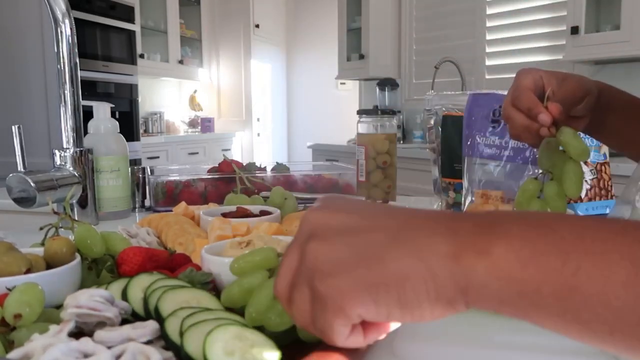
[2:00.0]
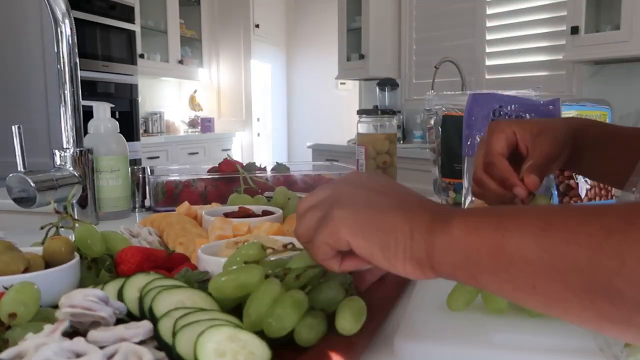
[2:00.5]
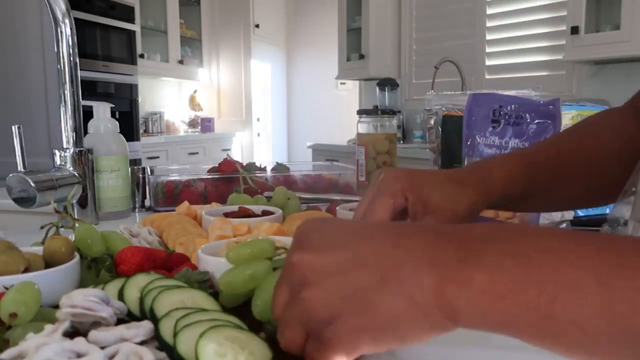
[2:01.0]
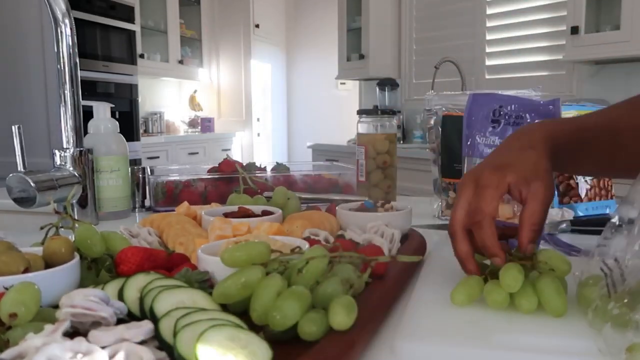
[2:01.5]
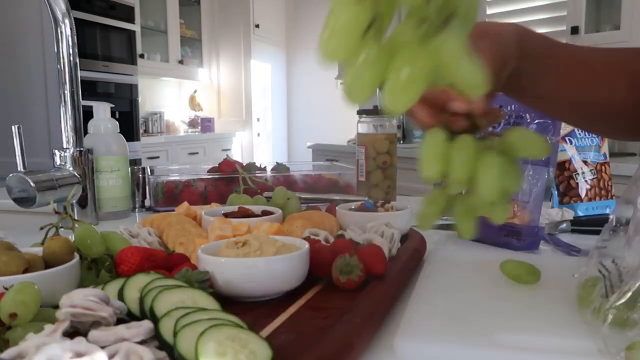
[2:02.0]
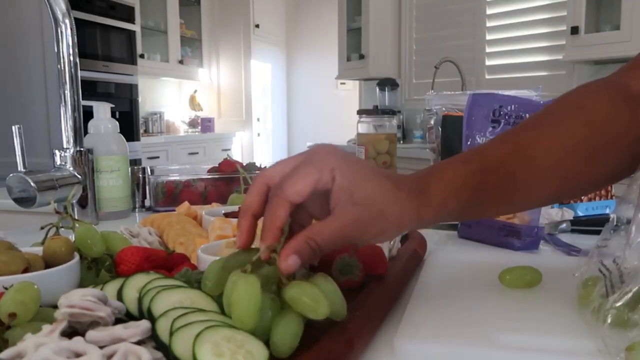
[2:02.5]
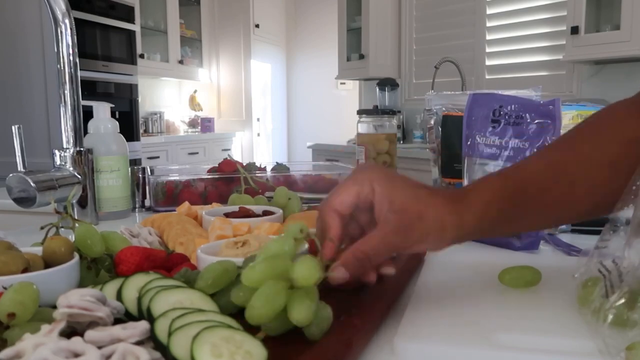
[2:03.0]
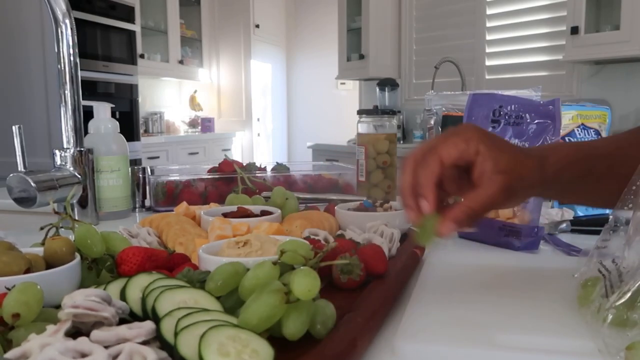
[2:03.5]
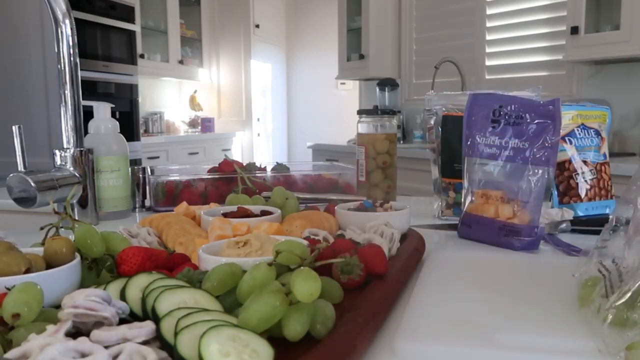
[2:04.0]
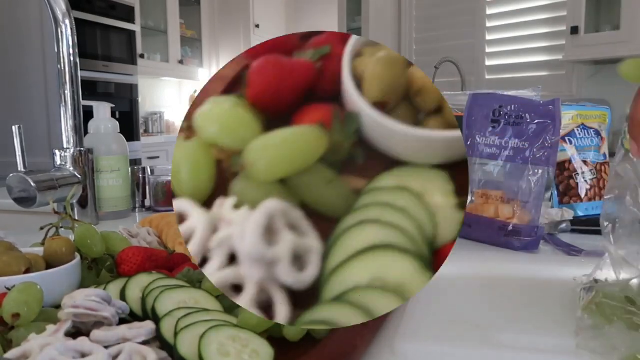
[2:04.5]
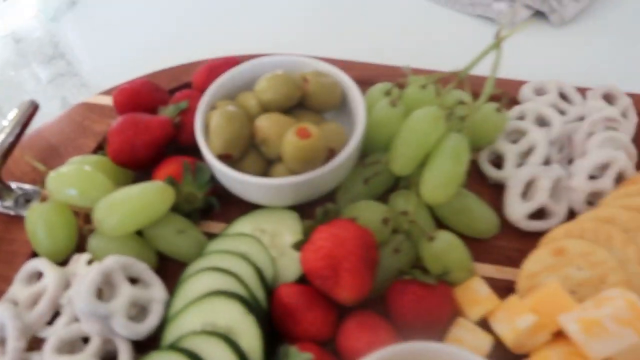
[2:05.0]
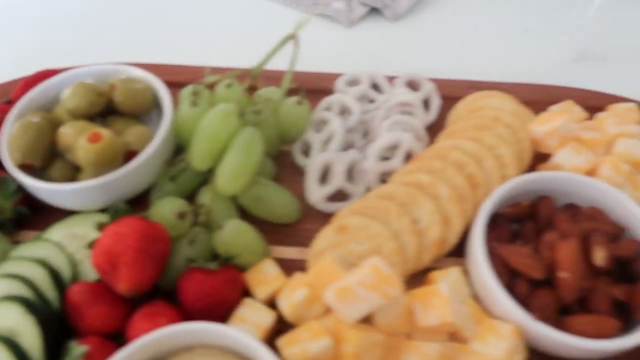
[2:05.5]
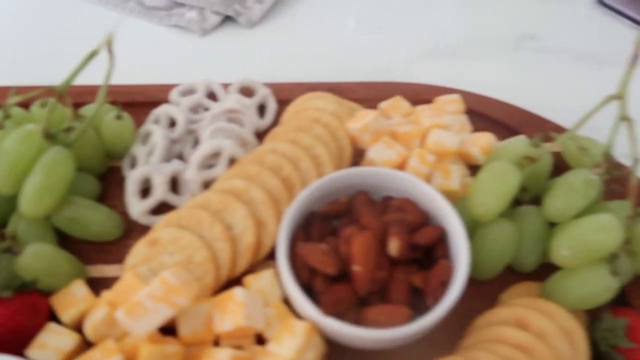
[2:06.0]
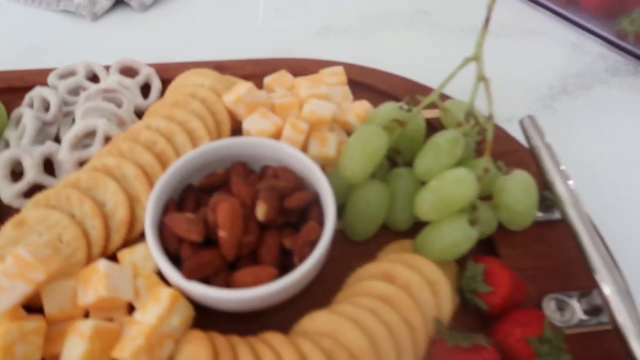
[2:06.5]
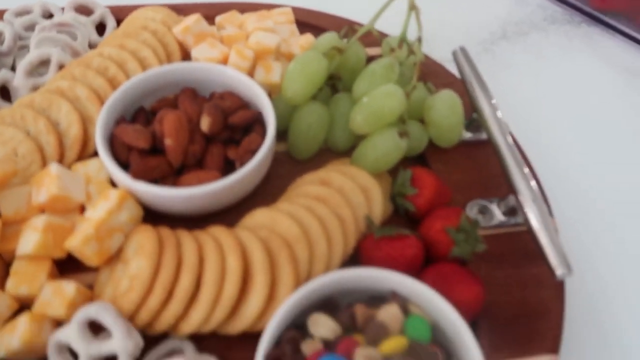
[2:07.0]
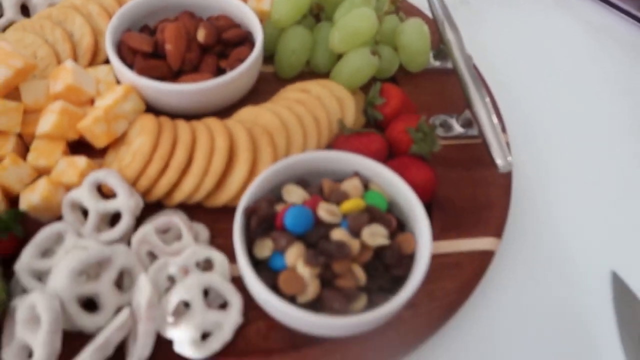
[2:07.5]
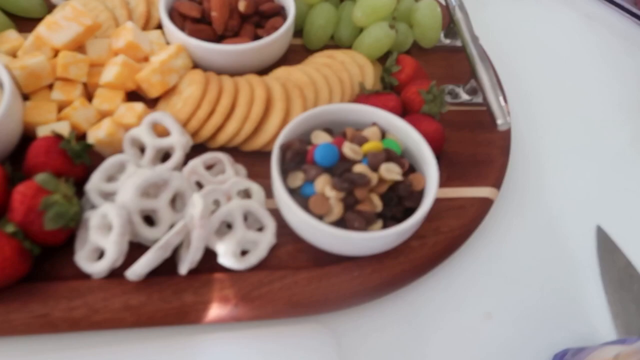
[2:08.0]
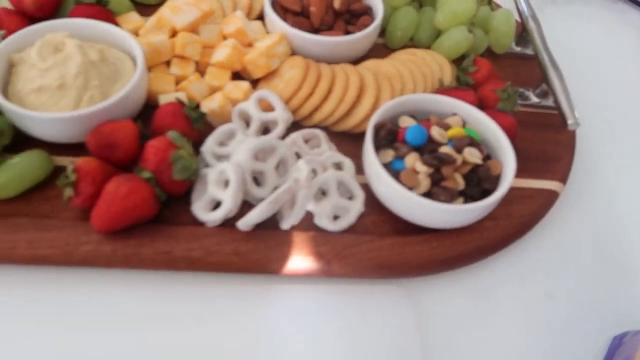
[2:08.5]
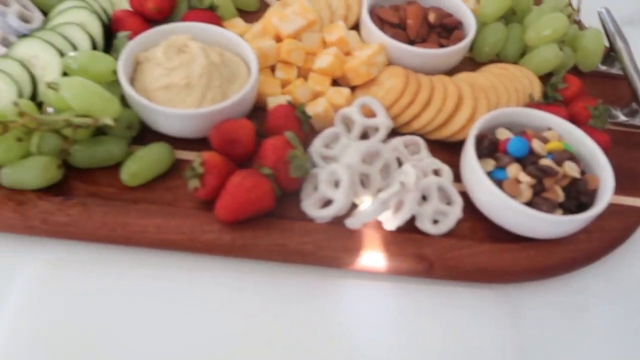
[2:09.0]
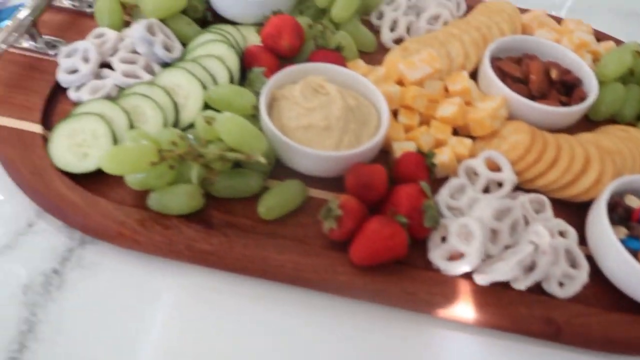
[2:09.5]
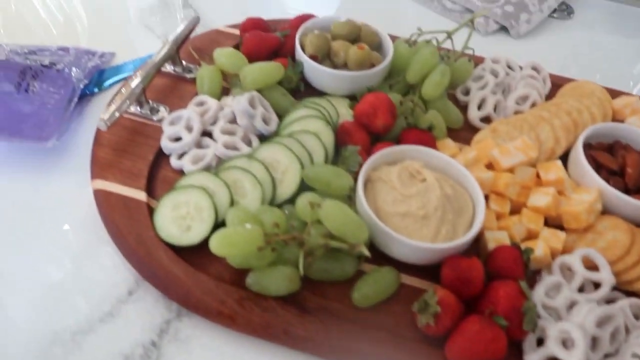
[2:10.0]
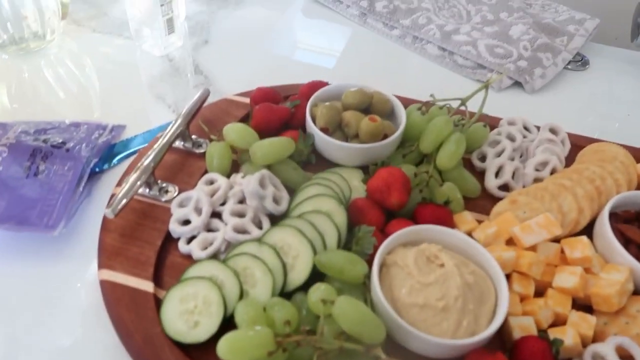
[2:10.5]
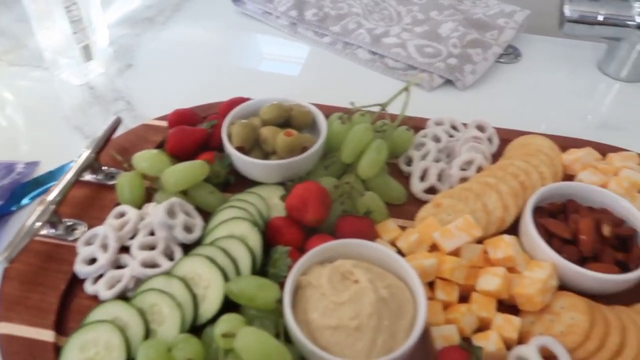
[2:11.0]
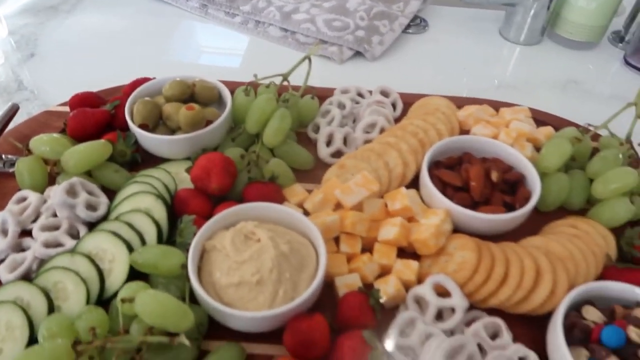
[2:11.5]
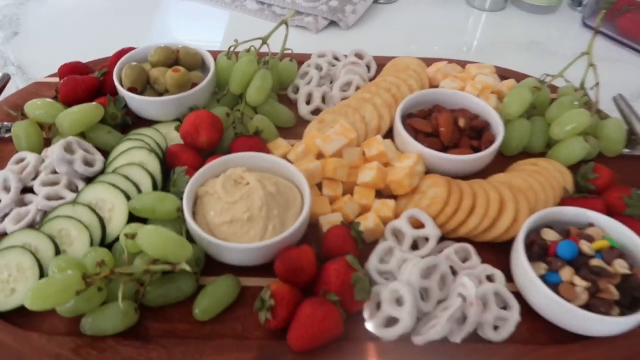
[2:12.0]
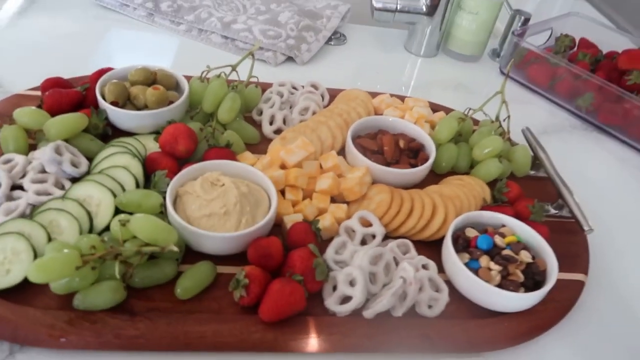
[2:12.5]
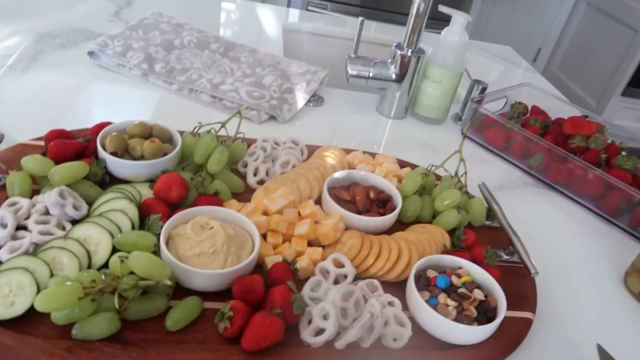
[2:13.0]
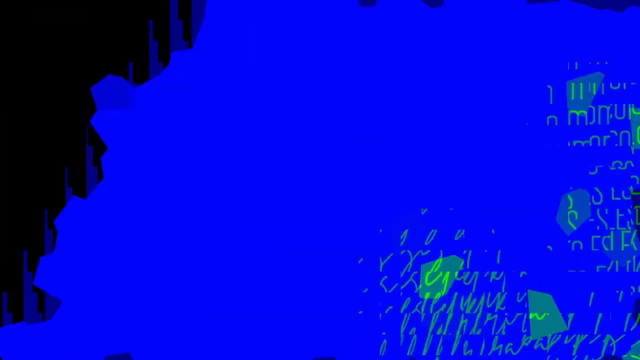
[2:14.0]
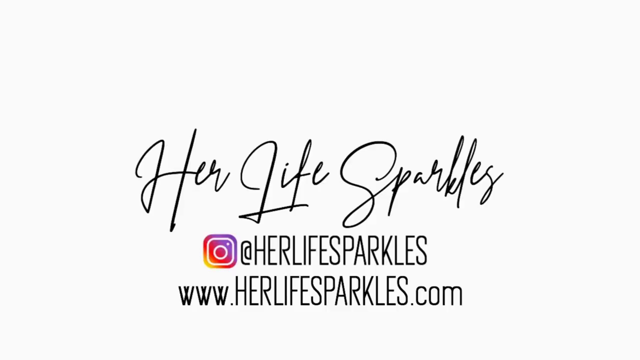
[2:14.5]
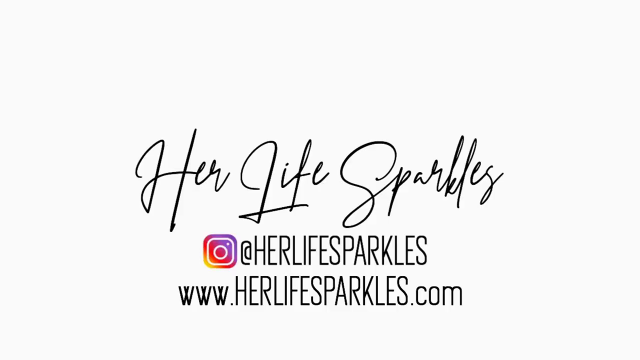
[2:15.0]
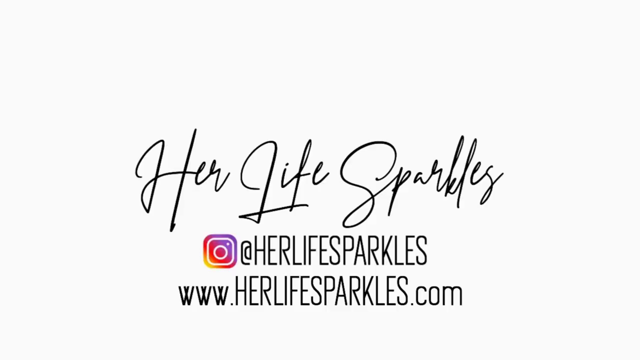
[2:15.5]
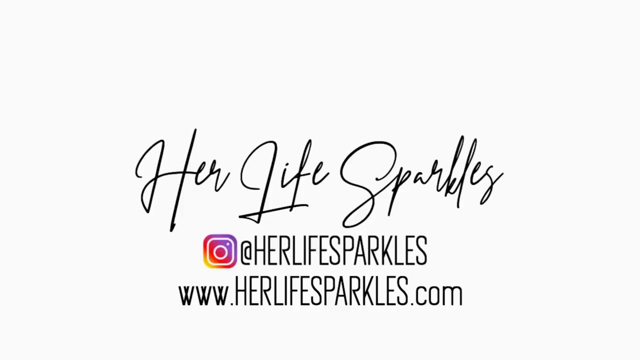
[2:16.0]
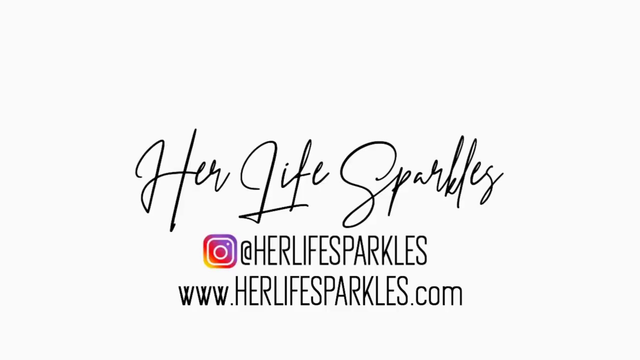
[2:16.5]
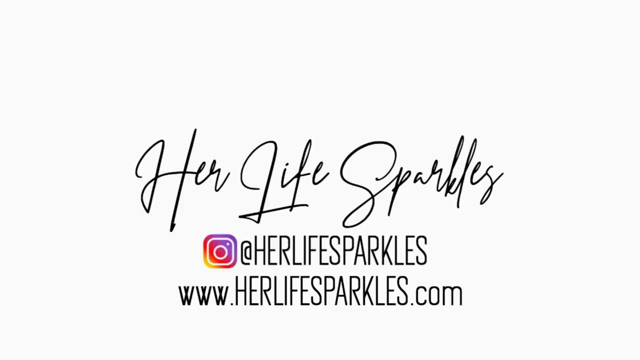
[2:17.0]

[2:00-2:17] The cheese board is shown with bowls on it: one has olives, one has the dip, one has sweets and one has nuts. The board also holds biscuits, cucumbers, strawberries and pretzels. The board is placed on the white kitchen counter. There is hand wash next to the kitchen sink, along with the tap, a blender, the oven, the microwave, white kitchen cupboards and the kitchen blind. The lady wears a black and white top. While she was preparing the board, one of the plates dropped onto the kitchen counter; she picked it up and placed it back on the board. At the end of the video, text says "hey".